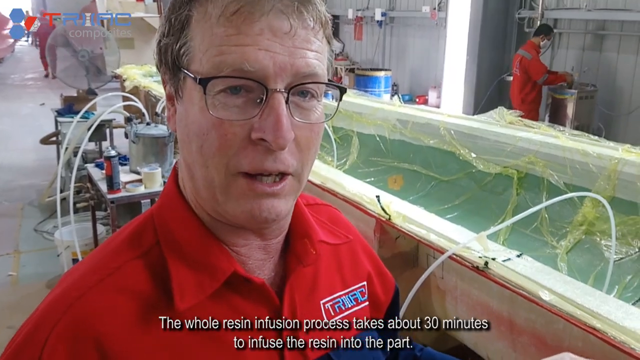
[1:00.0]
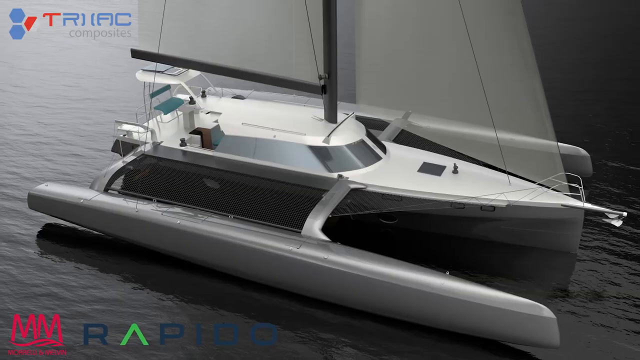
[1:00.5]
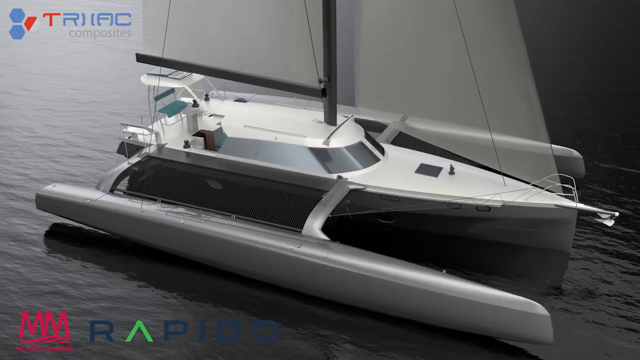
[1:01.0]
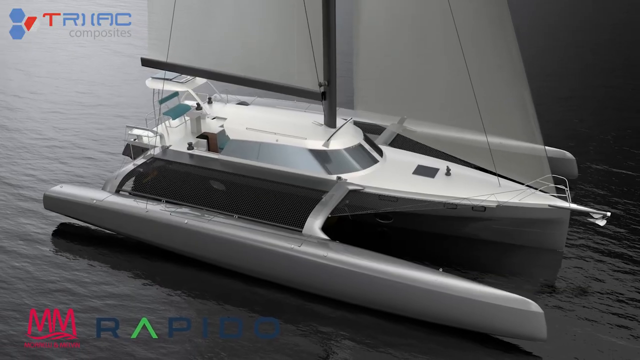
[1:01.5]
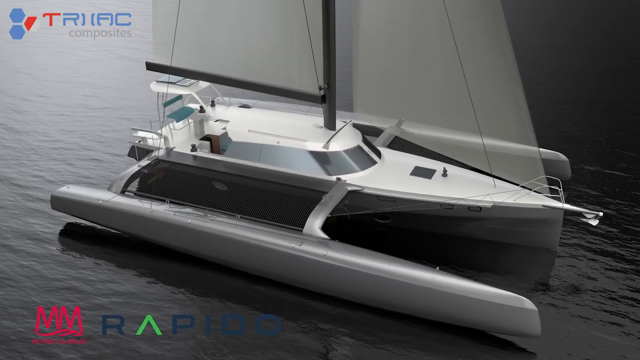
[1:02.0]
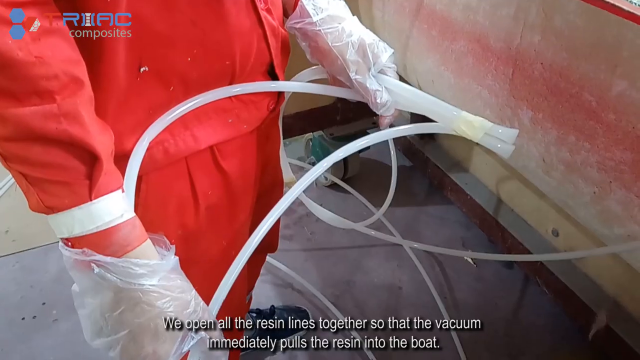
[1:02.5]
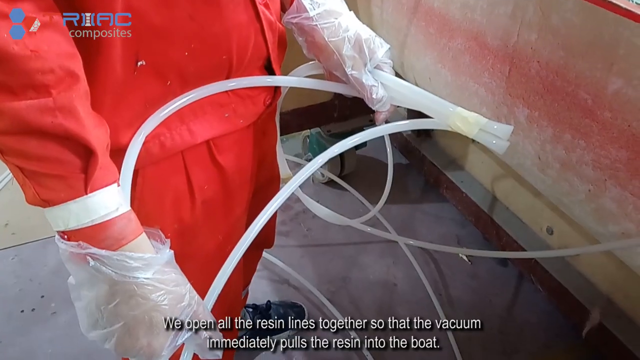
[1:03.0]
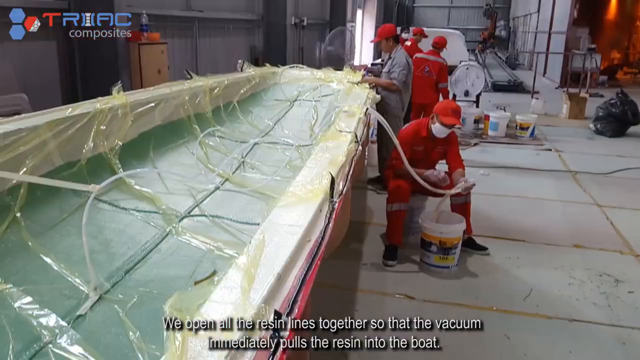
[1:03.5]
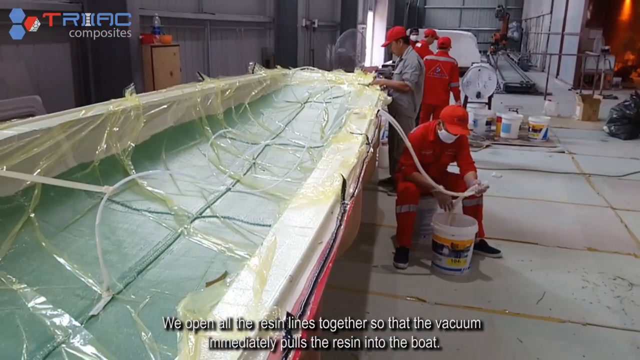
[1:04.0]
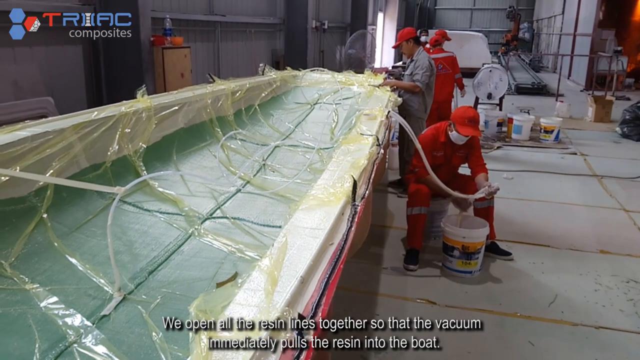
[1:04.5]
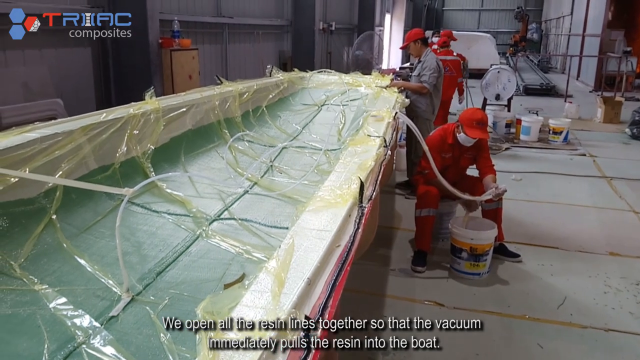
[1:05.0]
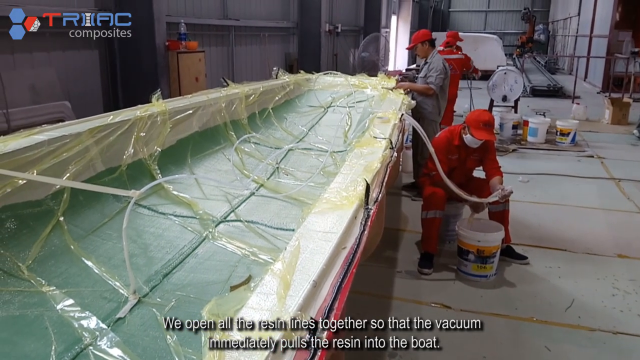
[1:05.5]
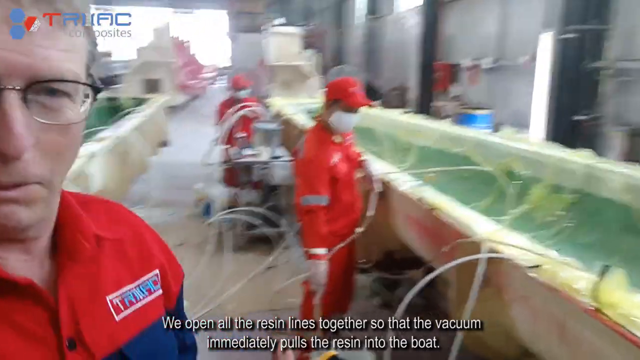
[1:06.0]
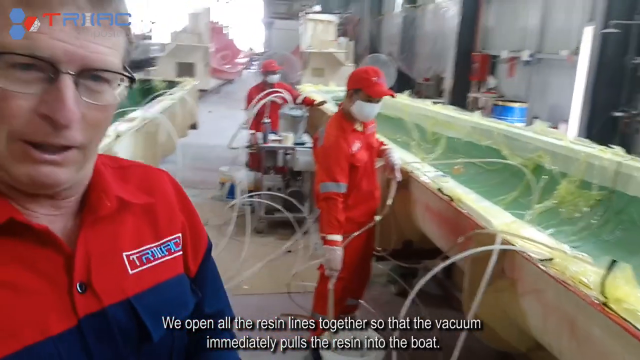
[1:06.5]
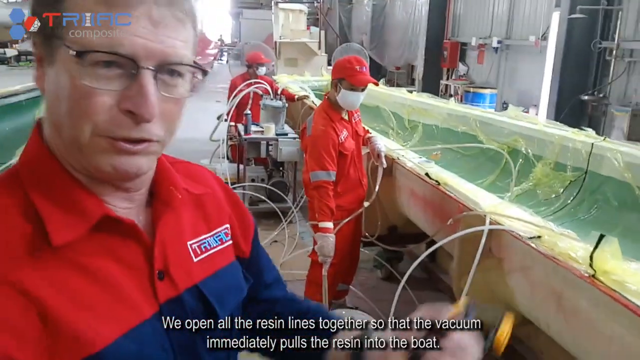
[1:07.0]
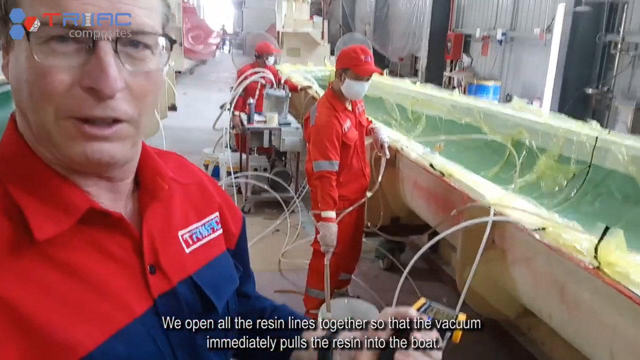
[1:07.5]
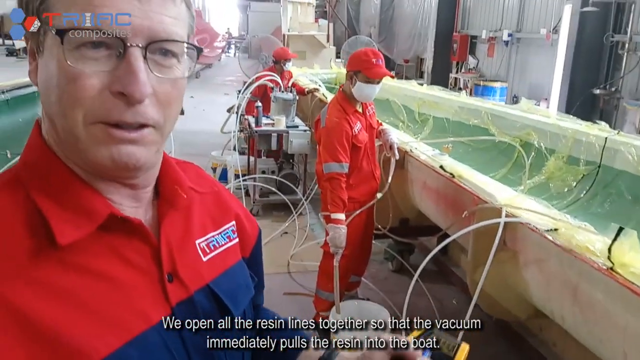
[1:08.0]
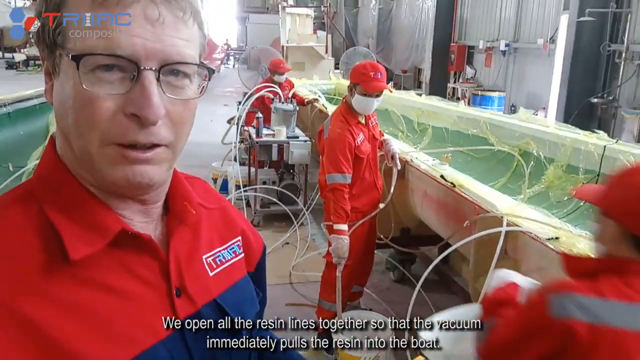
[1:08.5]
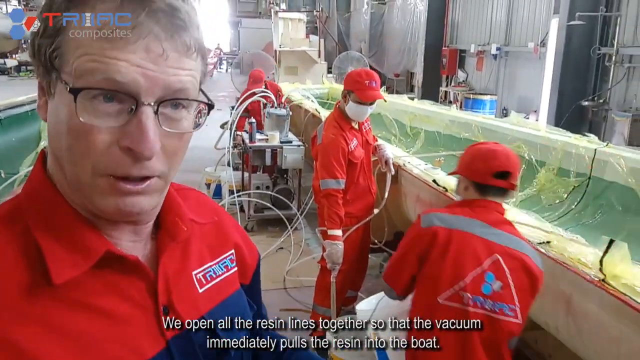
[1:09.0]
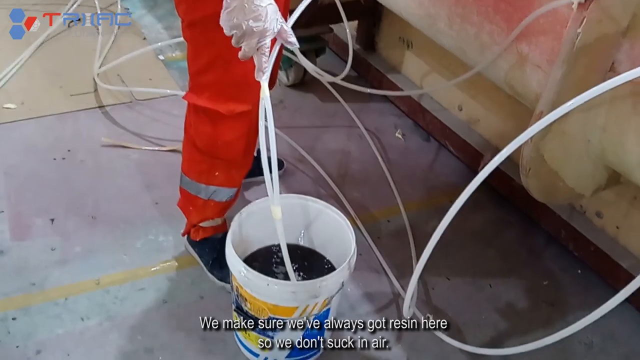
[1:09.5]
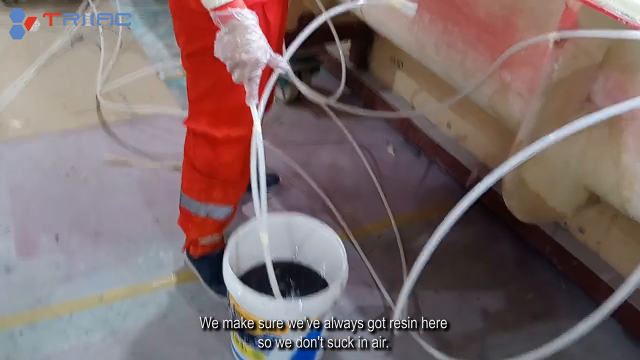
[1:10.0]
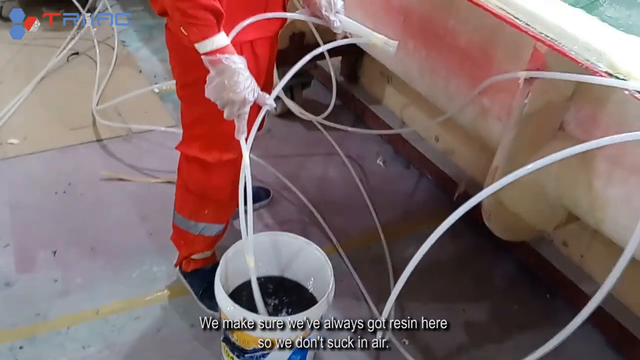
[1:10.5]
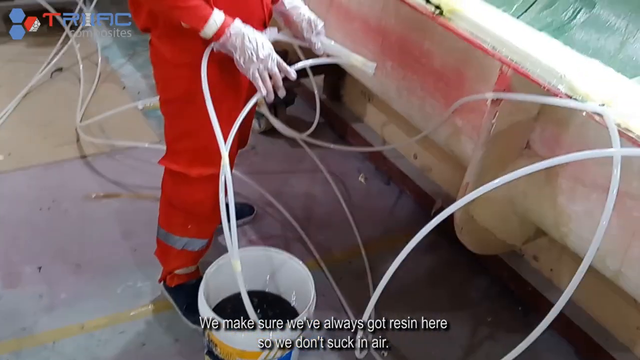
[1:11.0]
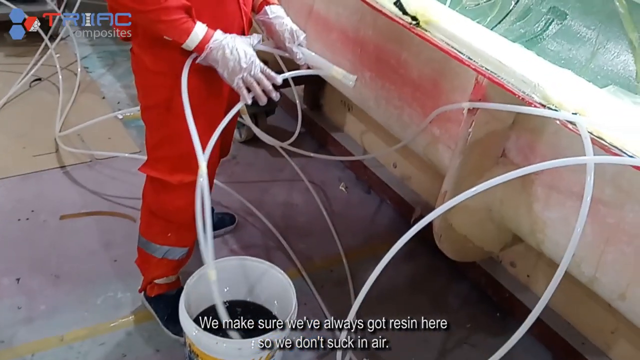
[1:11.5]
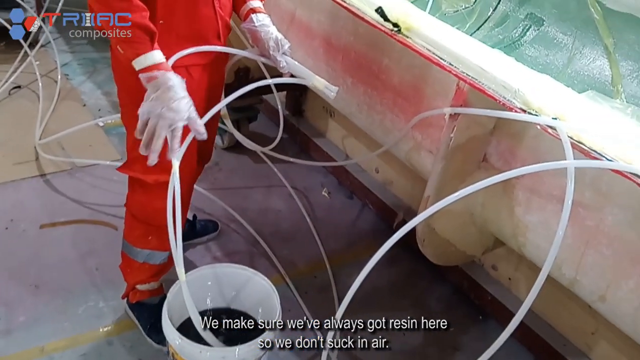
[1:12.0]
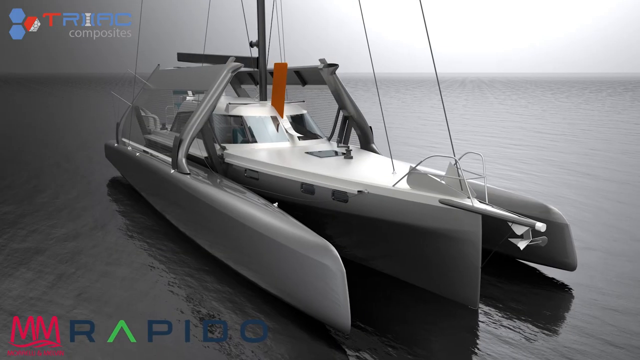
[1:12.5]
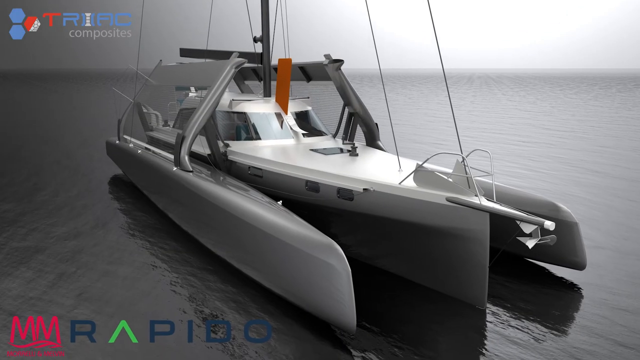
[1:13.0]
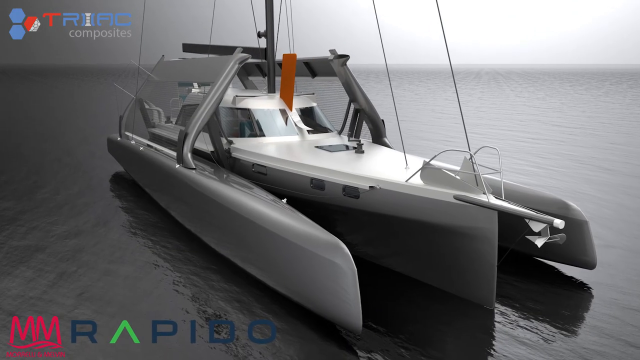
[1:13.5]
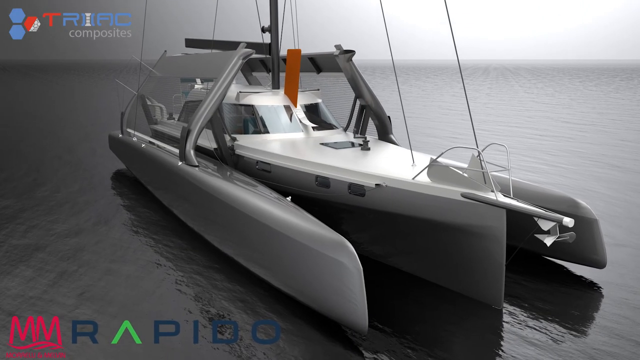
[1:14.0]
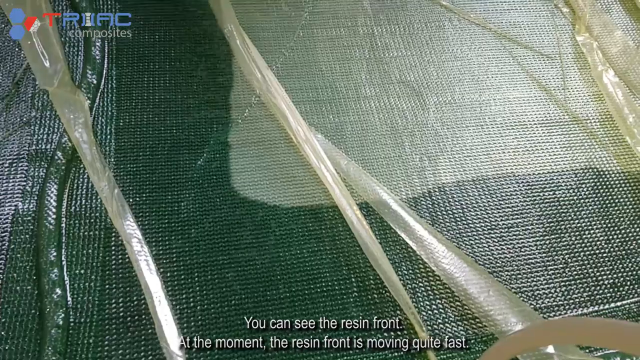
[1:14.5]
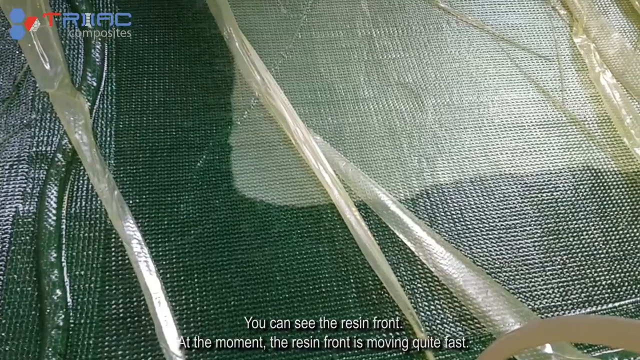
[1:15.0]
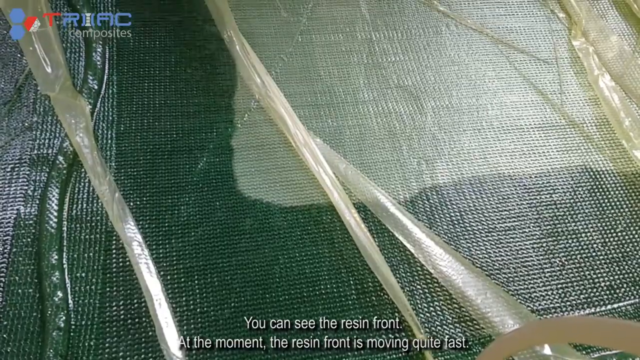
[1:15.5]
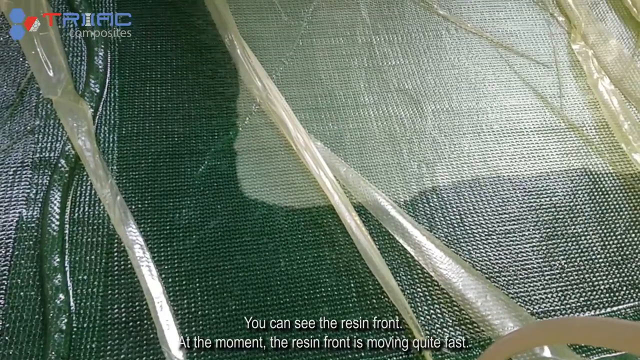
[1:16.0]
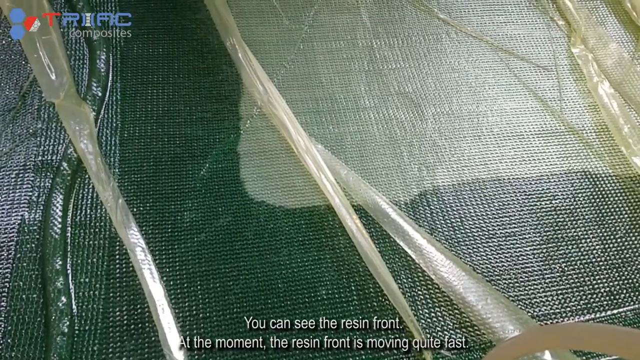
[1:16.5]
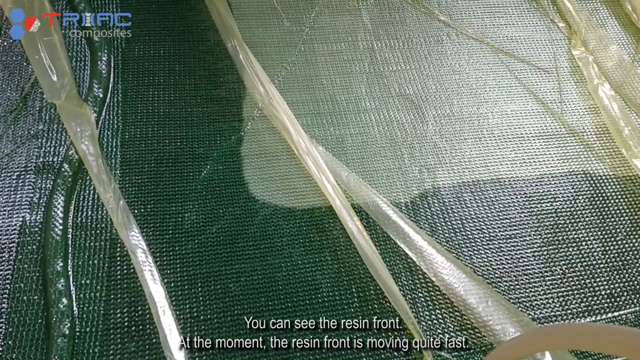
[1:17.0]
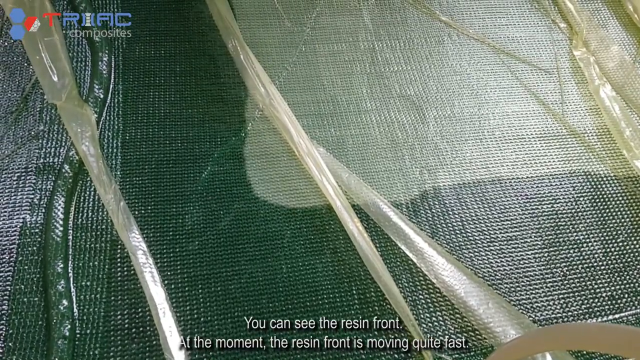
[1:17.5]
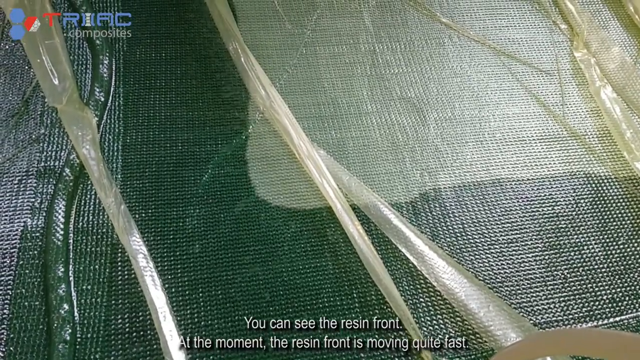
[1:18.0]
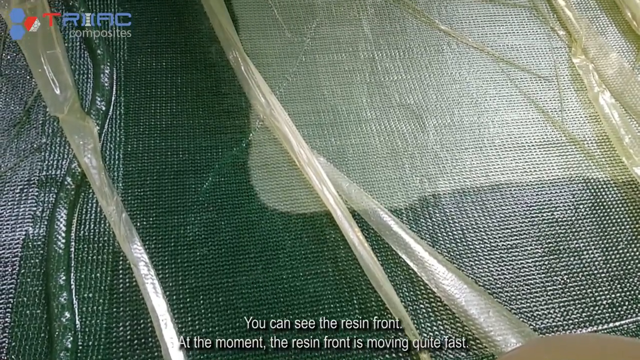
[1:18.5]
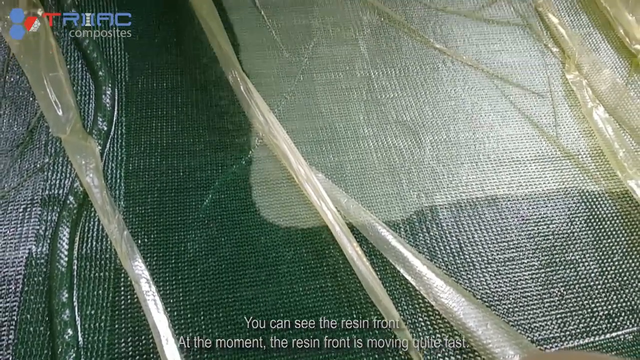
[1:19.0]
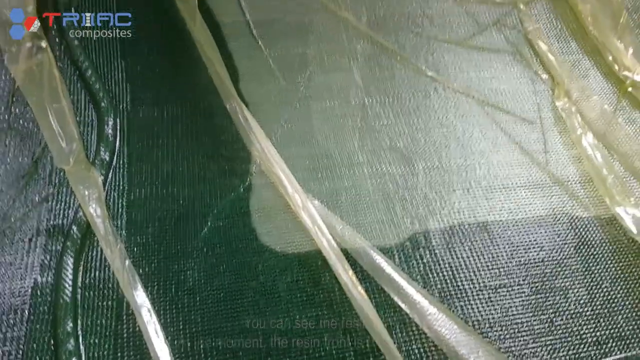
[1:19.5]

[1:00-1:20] Mark Waller is still shown talking. Shorter clips show individual factory workers who seem to be holding tubes, which are used to transfer resin from buckets to the float being assembled. Gray photos of AI representations of the Rapido are interspersed. The resin is distributed via the tubes from the bucket onto the float and moves fast, possibly with the help of some form of vacuum.